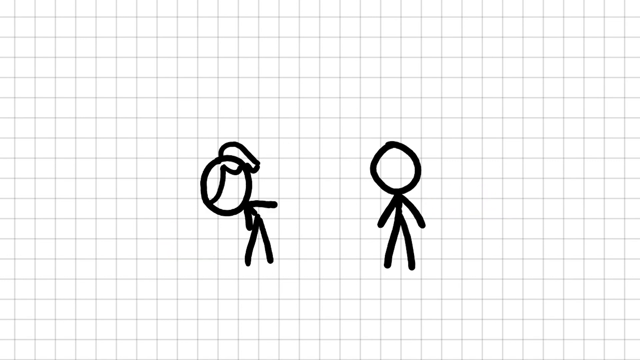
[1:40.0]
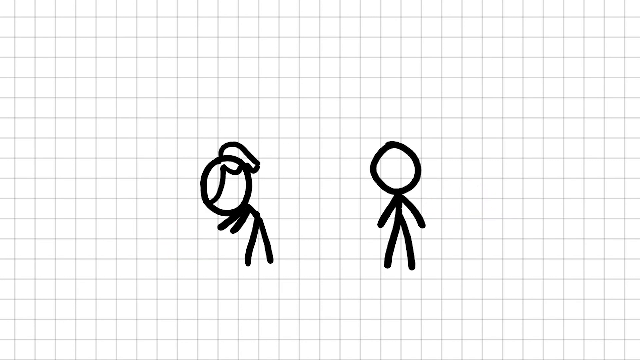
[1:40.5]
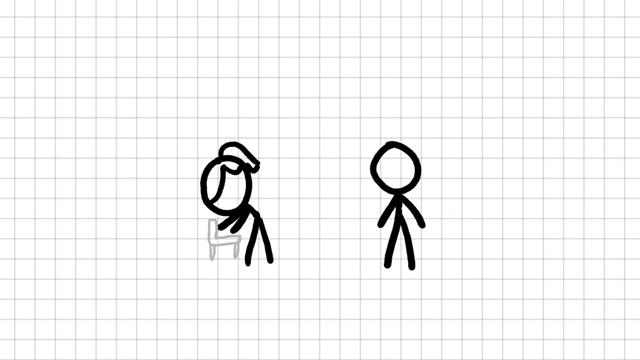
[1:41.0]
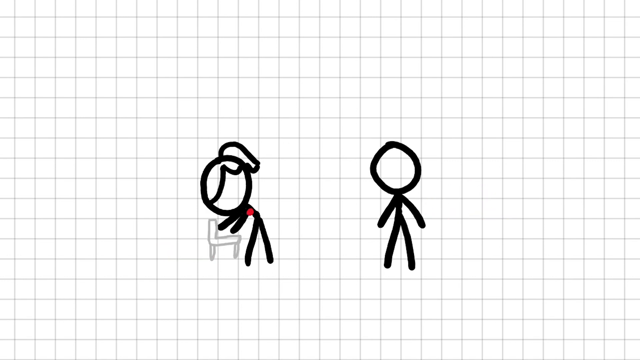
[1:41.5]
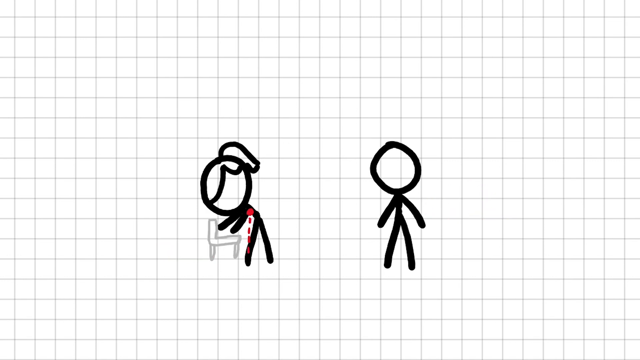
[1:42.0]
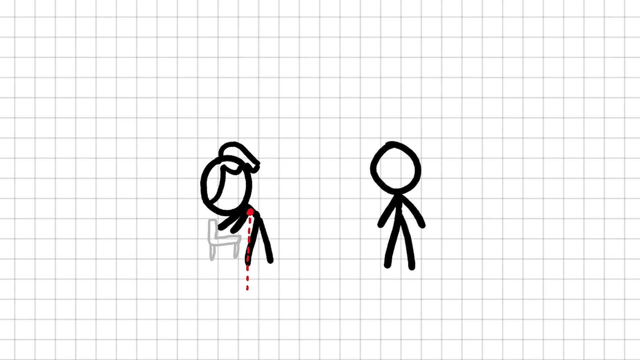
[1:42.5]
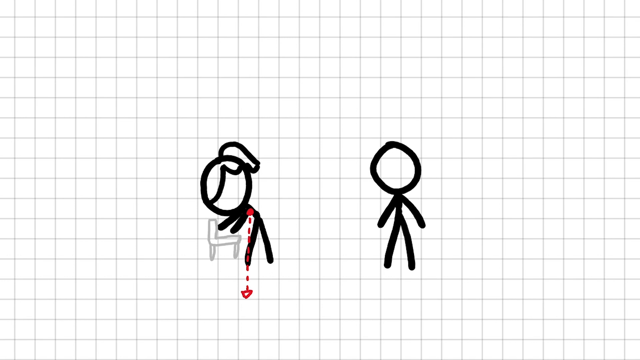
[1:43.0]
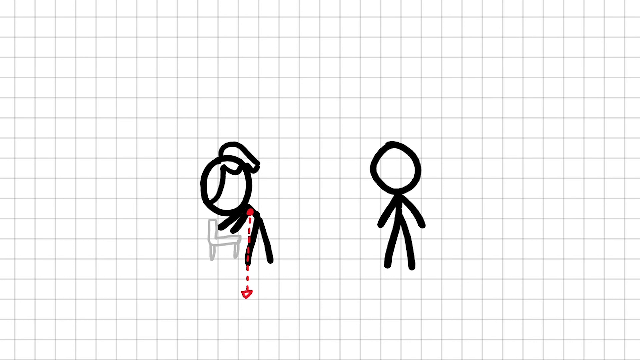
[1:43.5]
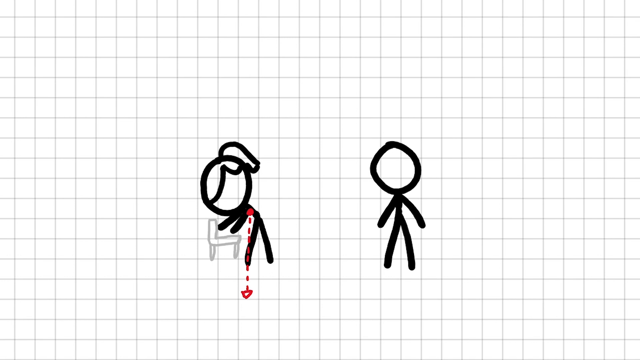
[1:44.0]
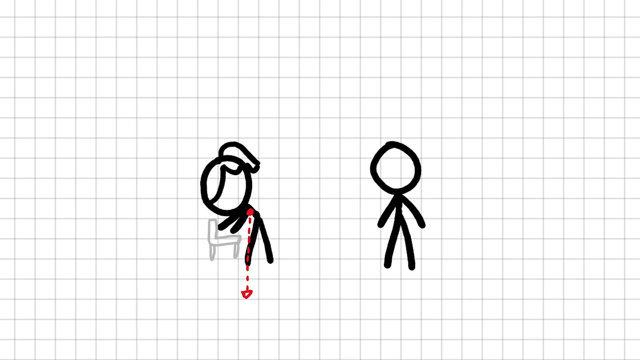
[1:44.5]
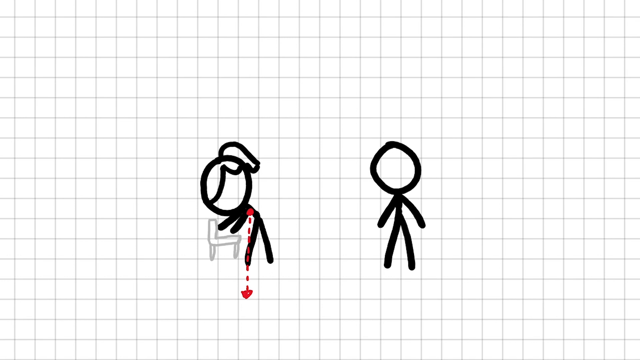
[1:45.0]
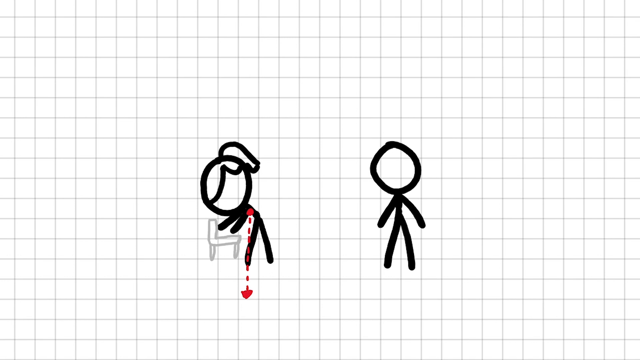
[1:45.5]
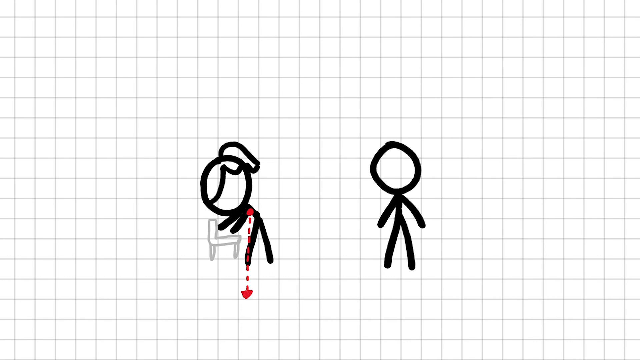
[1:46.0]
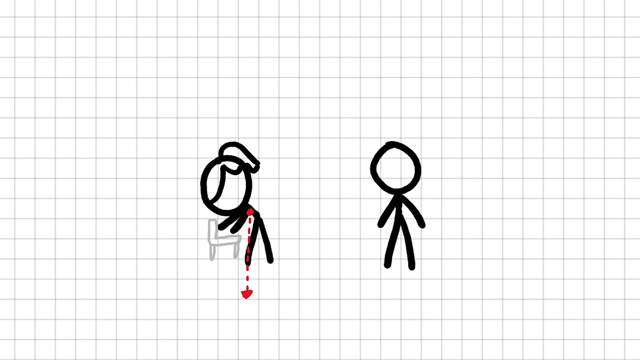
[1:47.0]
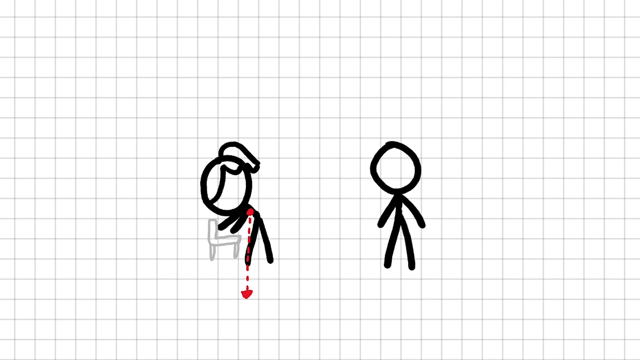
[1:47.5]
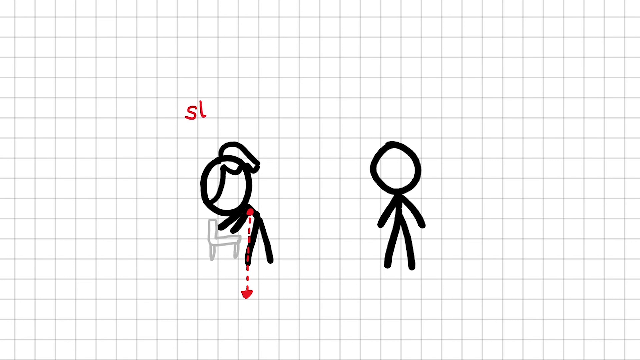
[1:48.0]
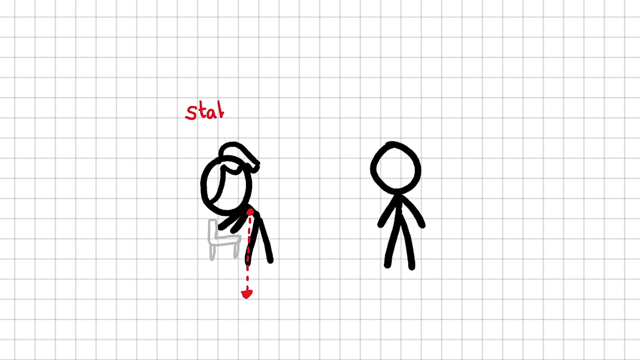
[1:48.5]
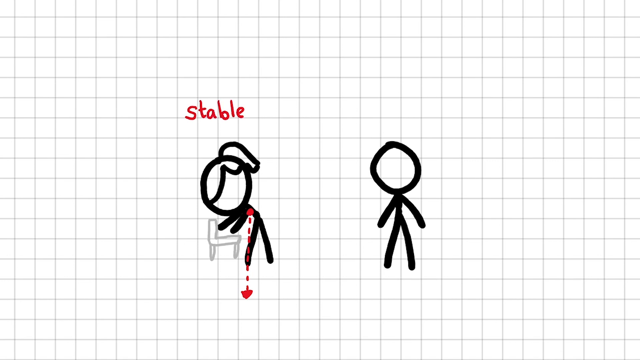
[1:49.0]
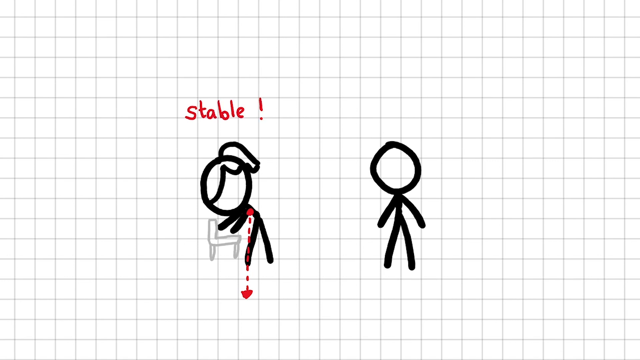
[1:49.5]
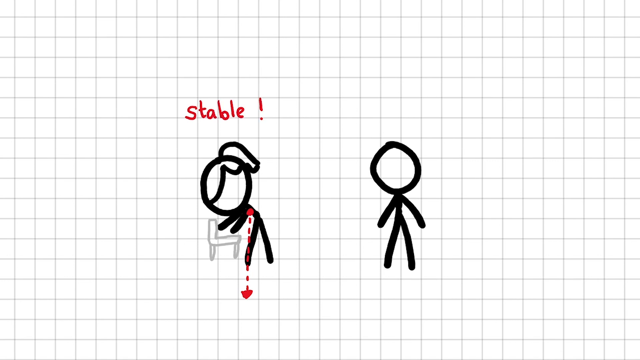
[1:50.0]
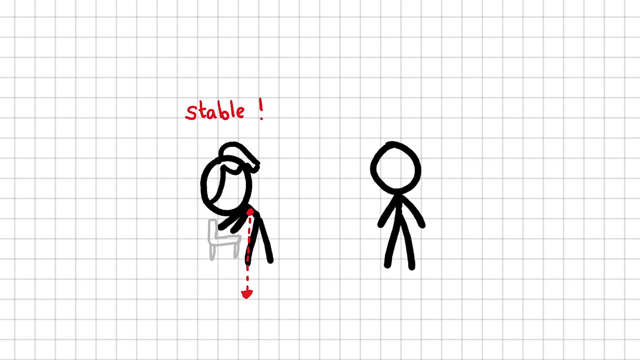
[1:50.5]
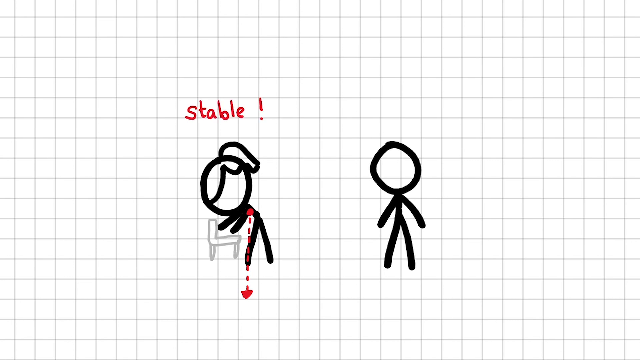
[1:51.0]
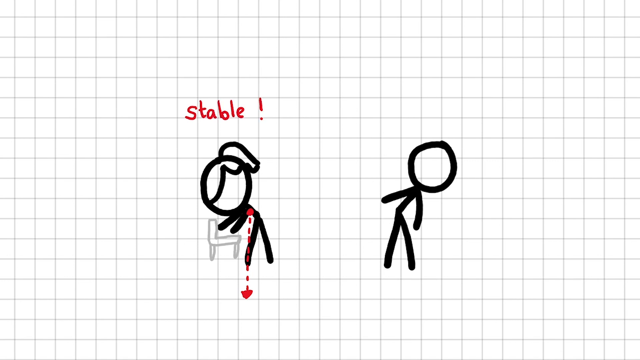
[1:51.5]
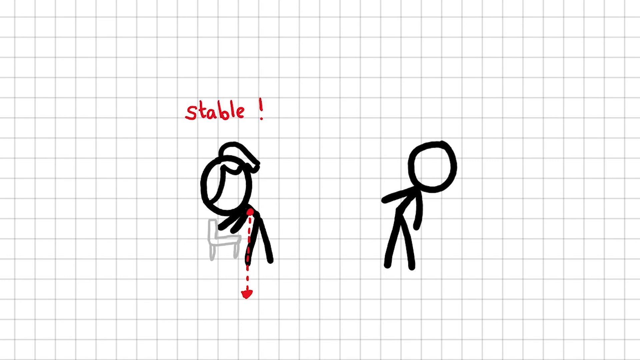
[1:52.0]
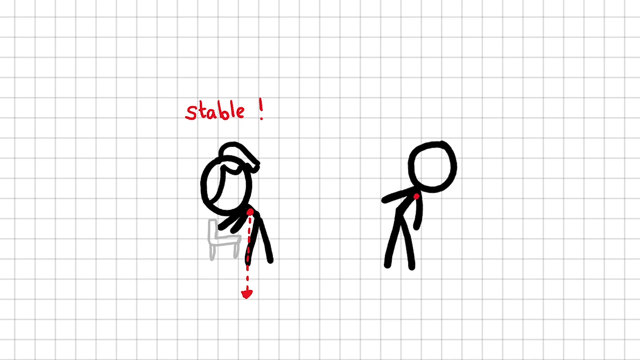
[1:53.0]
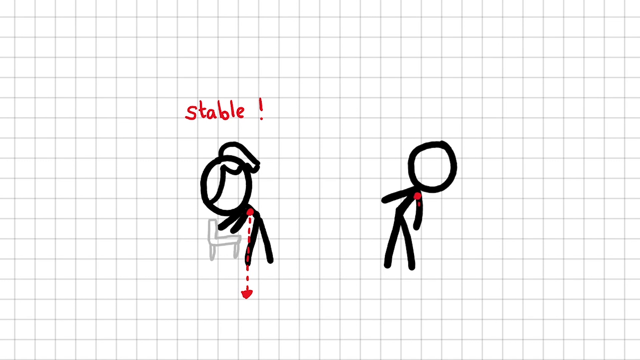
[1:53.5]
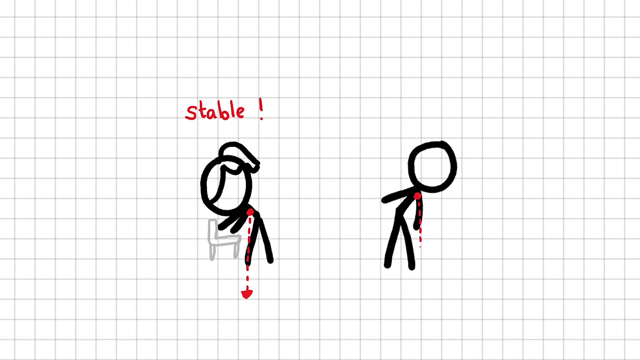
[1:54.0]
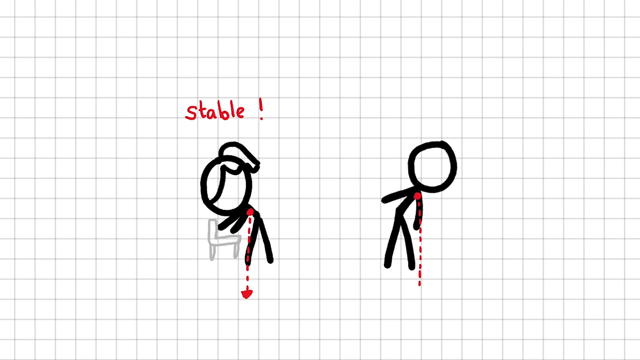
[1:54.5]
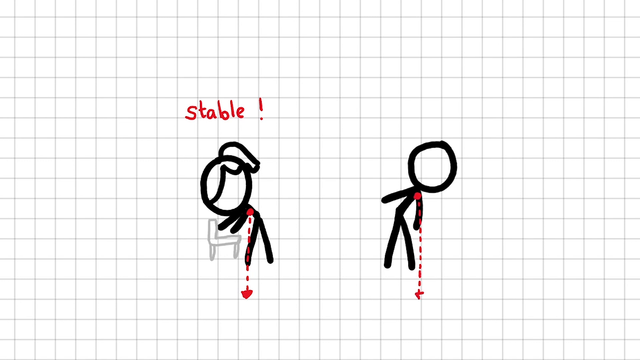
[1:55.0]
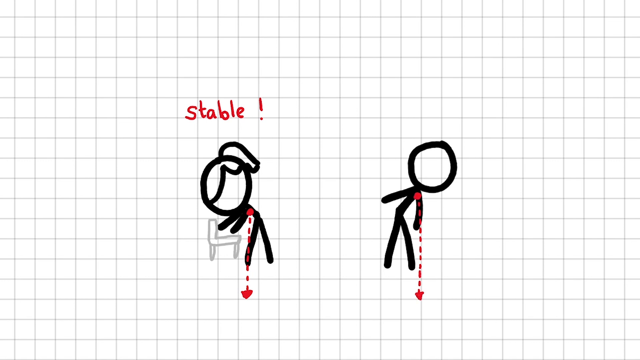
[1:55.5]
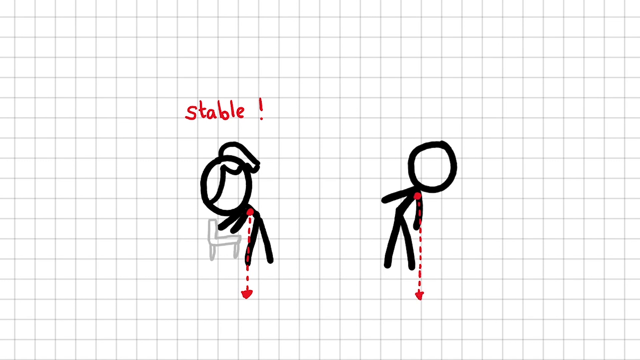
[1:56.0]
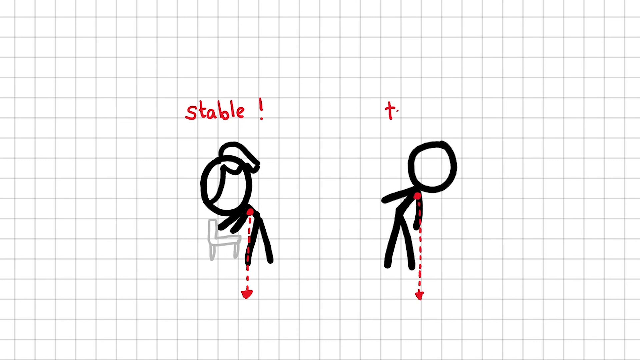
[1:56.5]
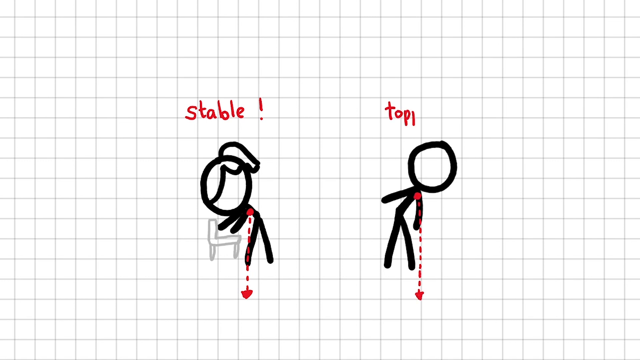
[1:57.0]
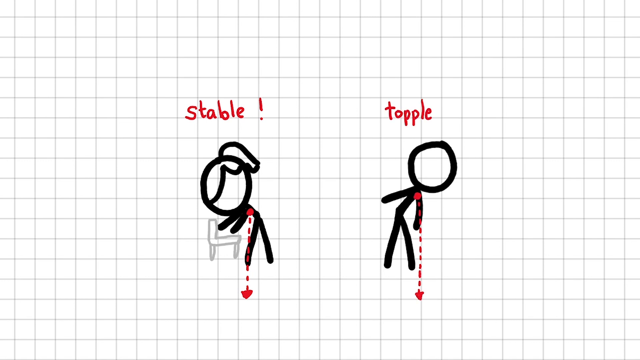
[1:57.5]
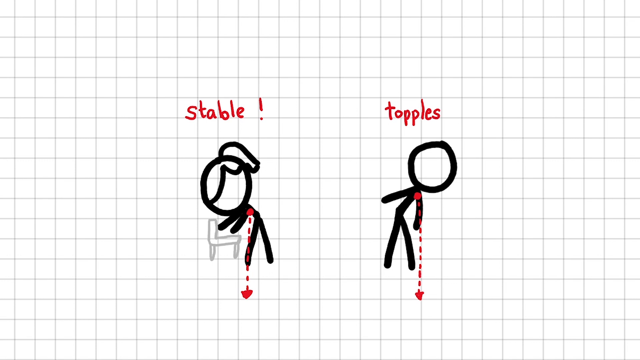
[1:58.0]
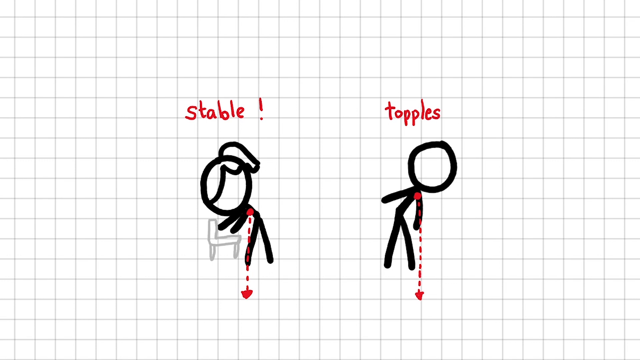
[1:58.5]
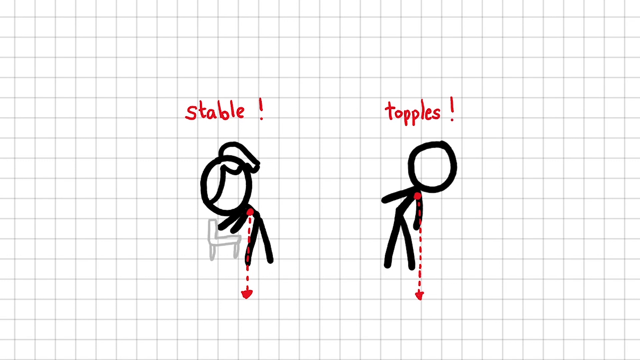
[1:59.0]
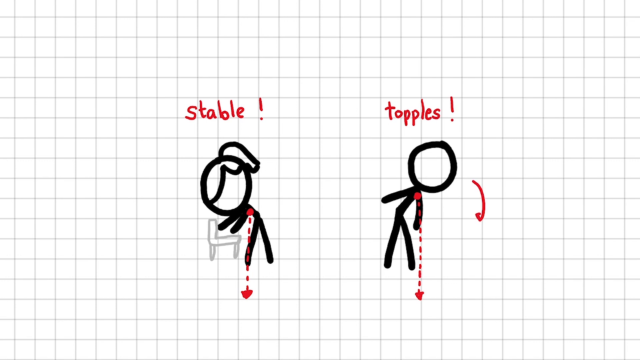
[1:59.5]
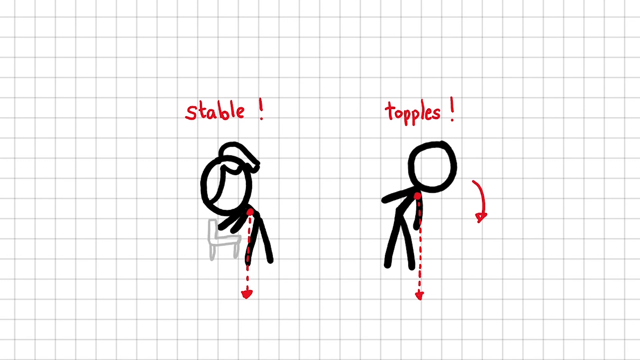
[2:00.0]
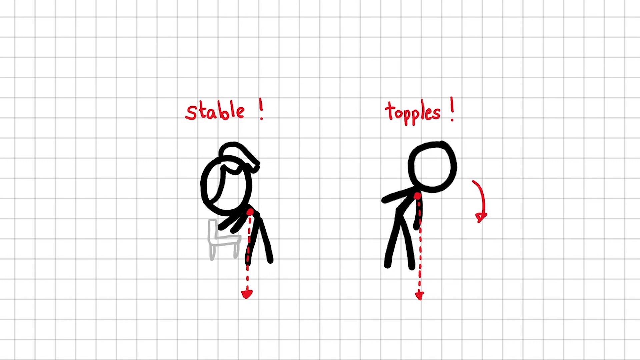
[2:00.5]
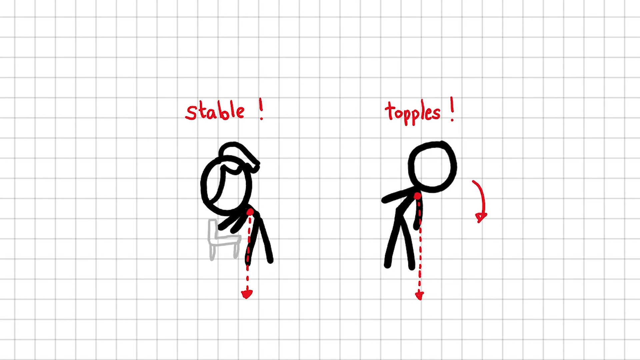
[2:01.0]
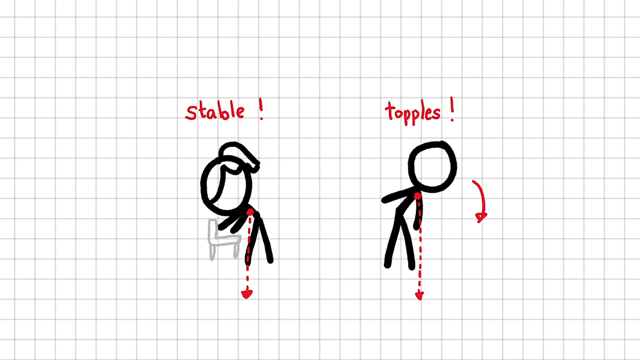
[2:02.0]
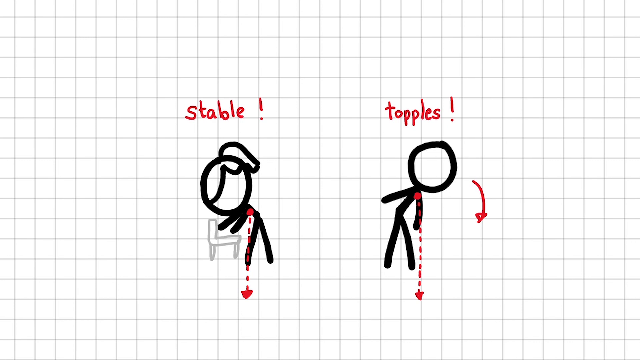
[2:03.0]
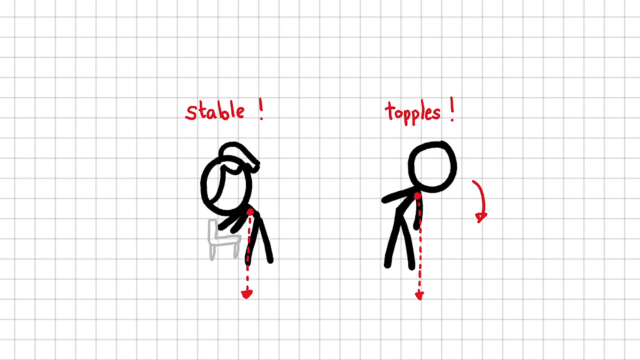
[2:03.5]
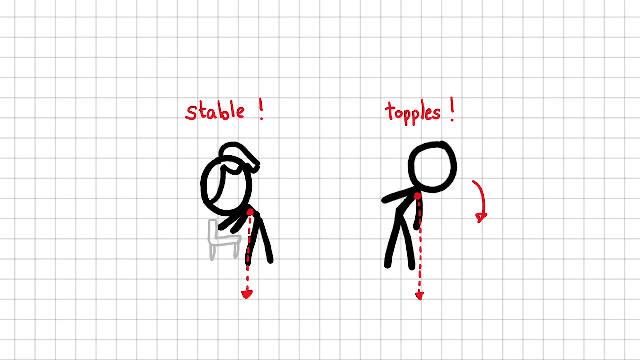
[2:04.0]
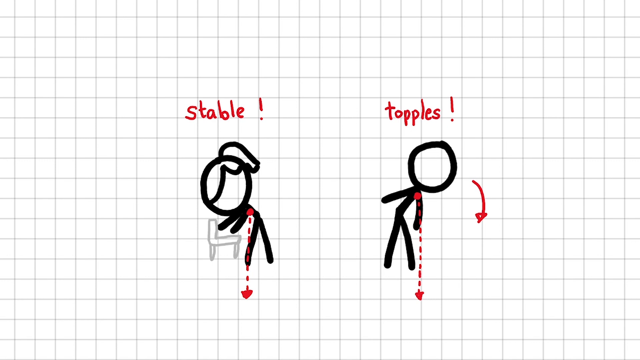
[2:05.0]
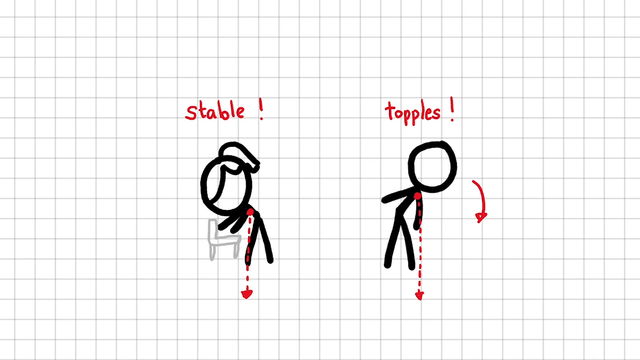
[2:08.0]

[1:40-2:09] The female and male characters are shown. The female character is holding a chair, more like setting up the chair, and red dotted lines on the screen indicate whether she is stable; she is shown to be stable, with a support. The male character has no support to hold on to and seems to be toppling, and then he is shown to topple. A red arrow points downwards.